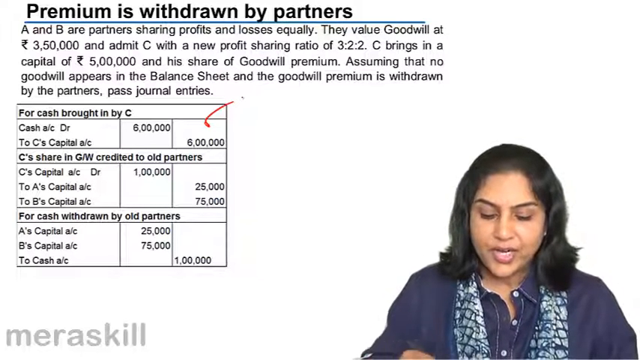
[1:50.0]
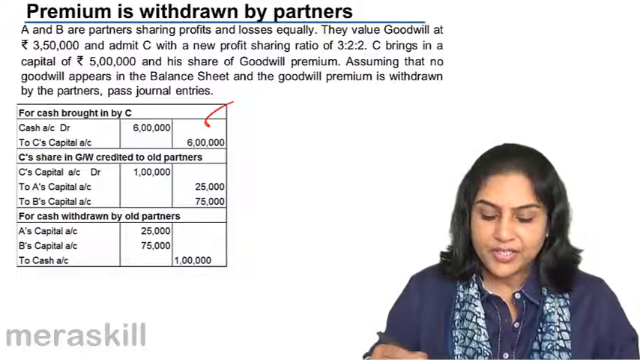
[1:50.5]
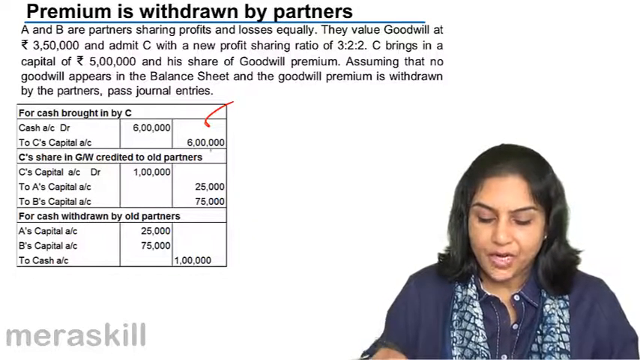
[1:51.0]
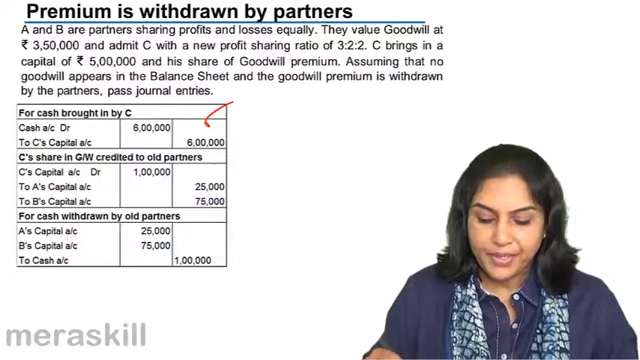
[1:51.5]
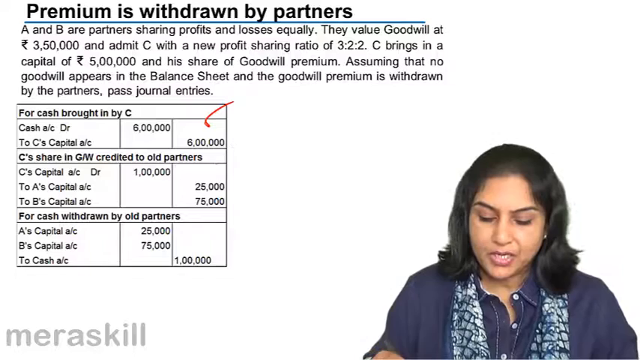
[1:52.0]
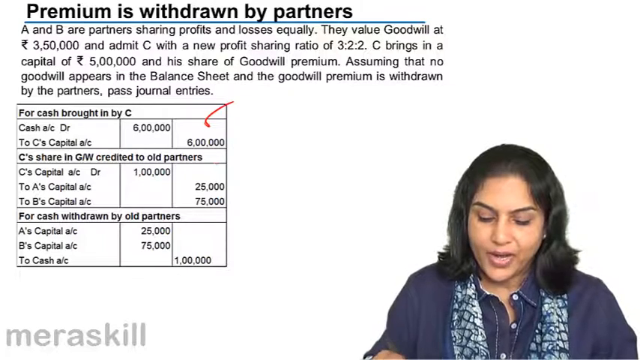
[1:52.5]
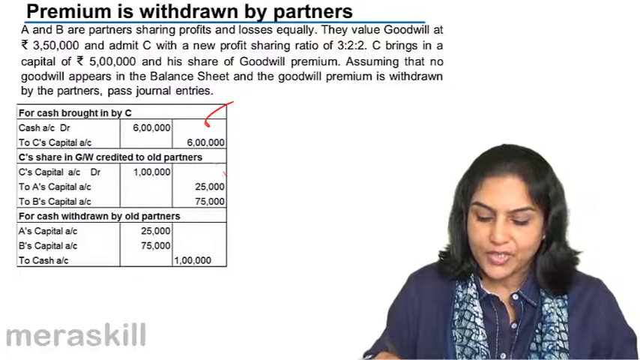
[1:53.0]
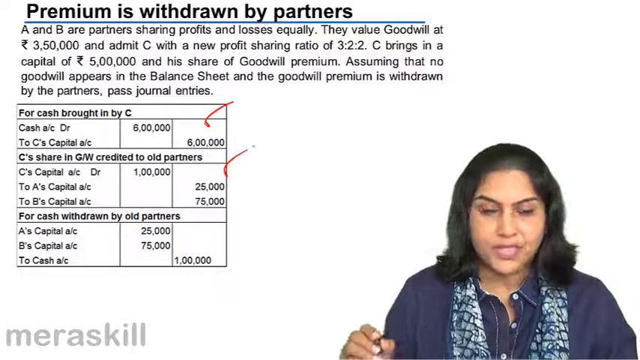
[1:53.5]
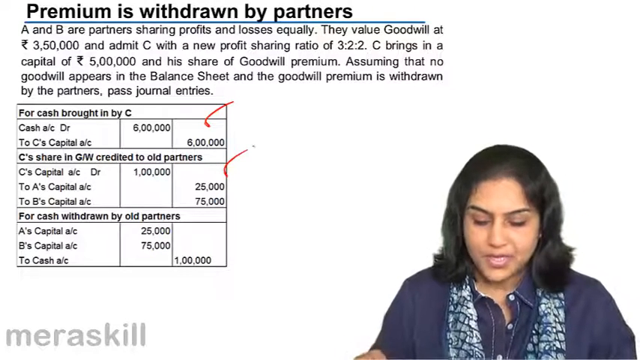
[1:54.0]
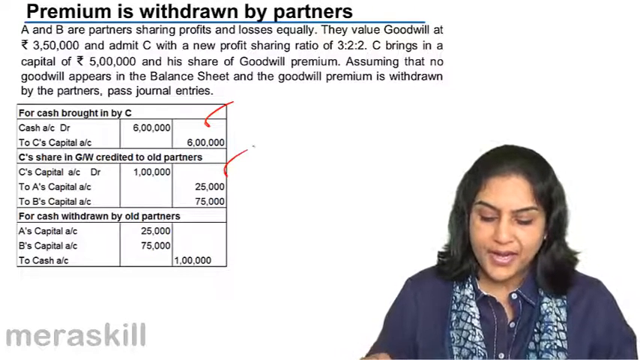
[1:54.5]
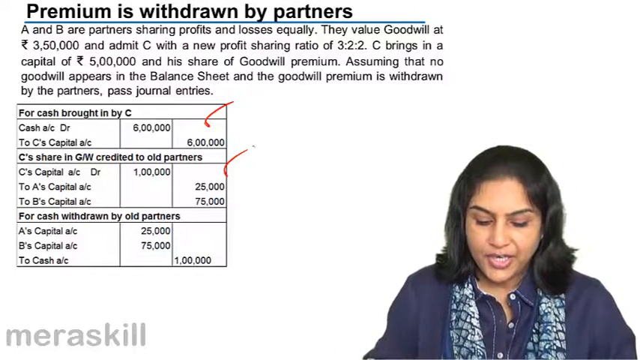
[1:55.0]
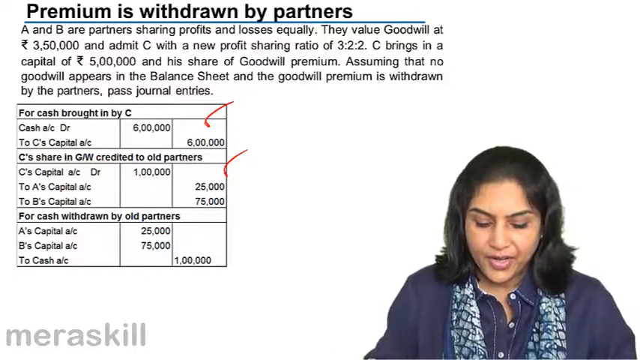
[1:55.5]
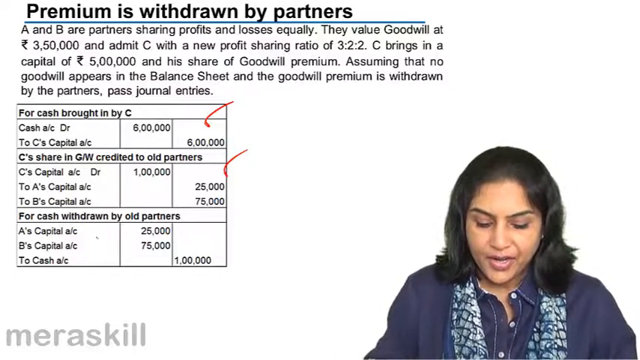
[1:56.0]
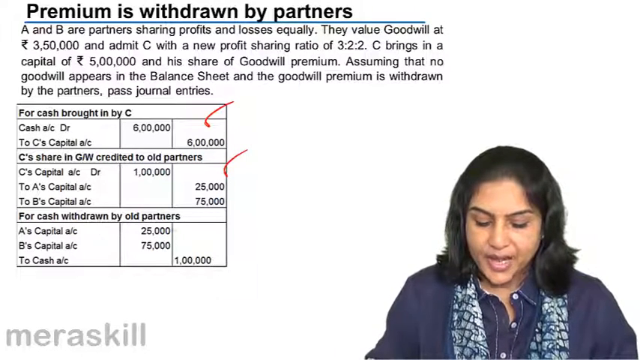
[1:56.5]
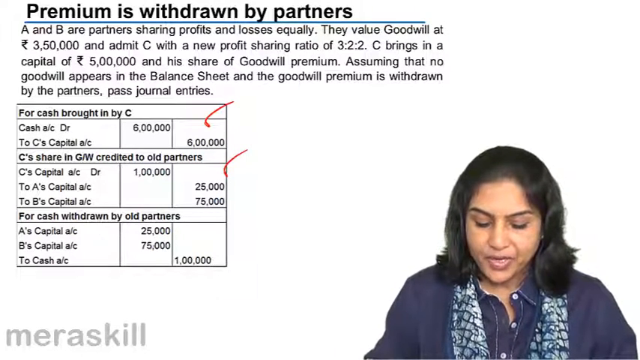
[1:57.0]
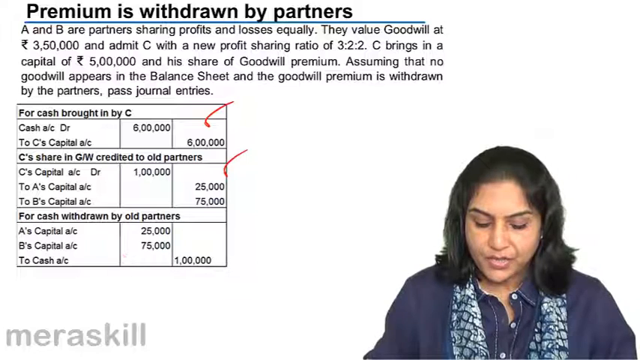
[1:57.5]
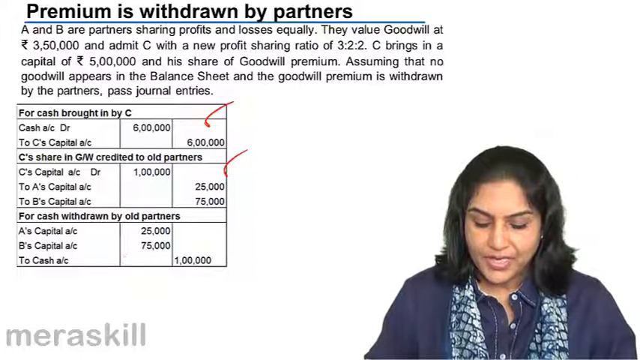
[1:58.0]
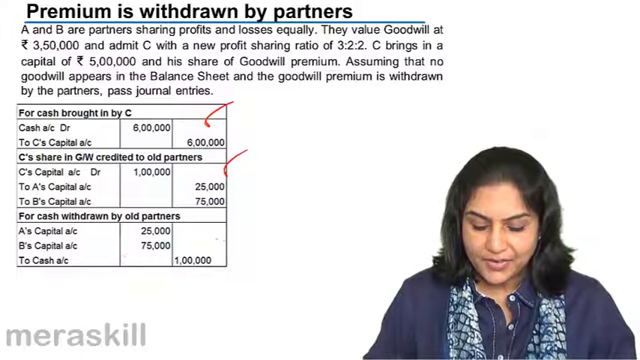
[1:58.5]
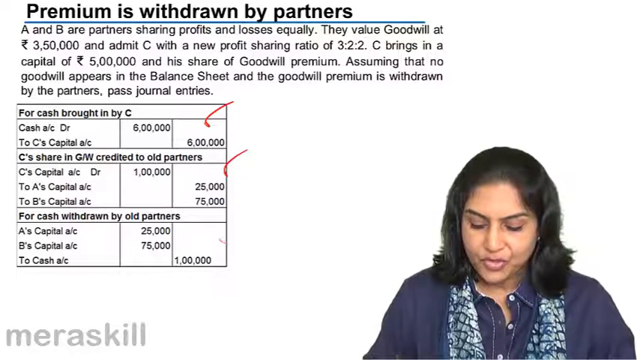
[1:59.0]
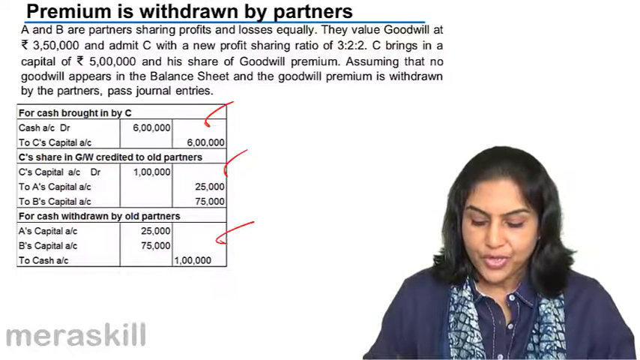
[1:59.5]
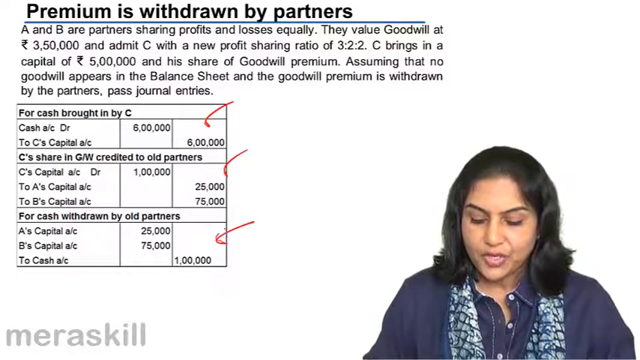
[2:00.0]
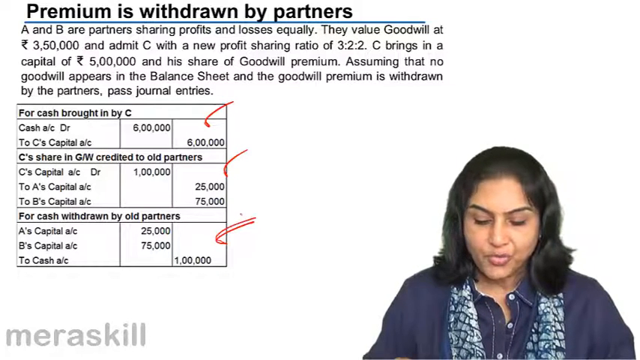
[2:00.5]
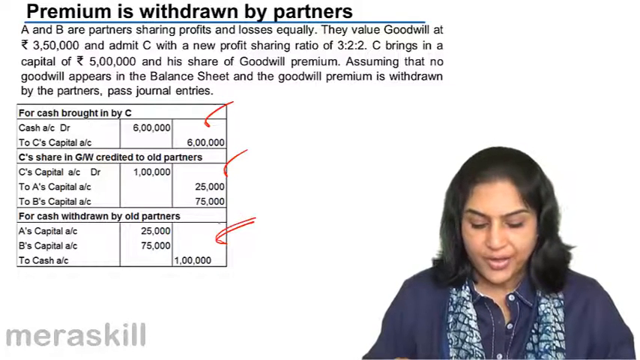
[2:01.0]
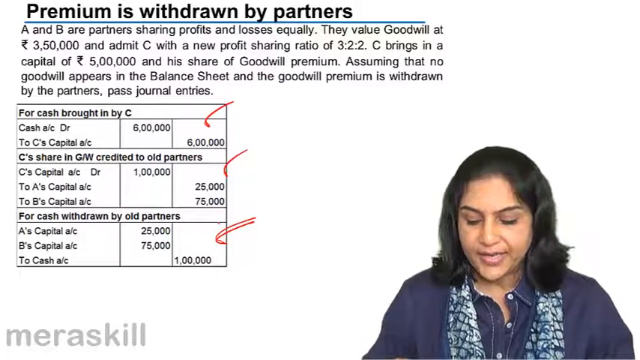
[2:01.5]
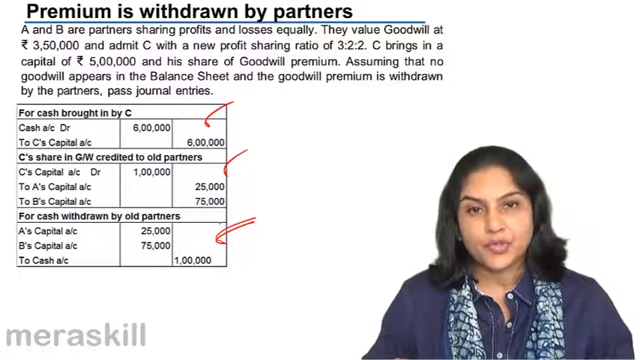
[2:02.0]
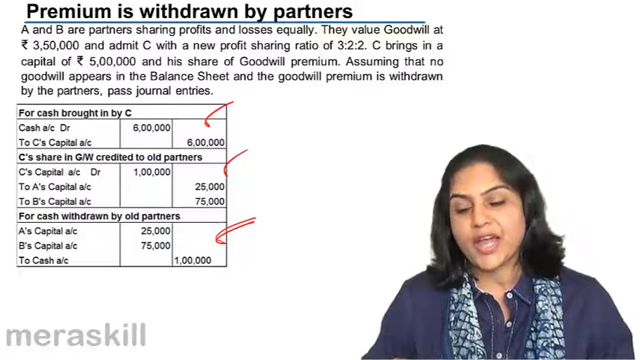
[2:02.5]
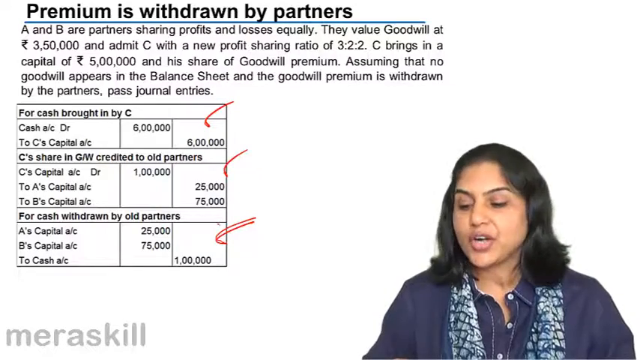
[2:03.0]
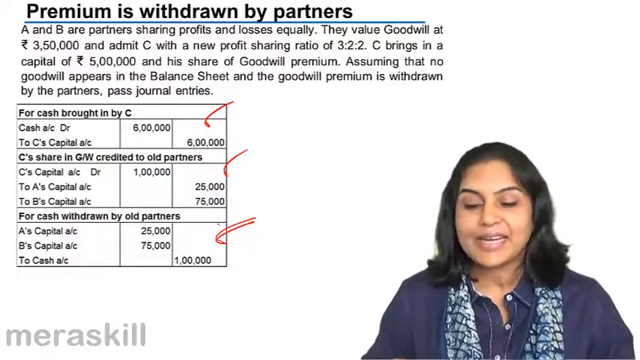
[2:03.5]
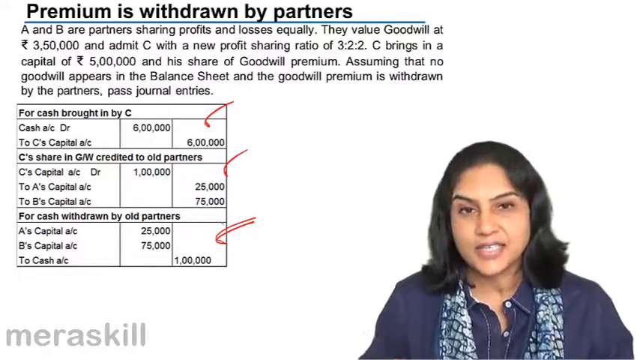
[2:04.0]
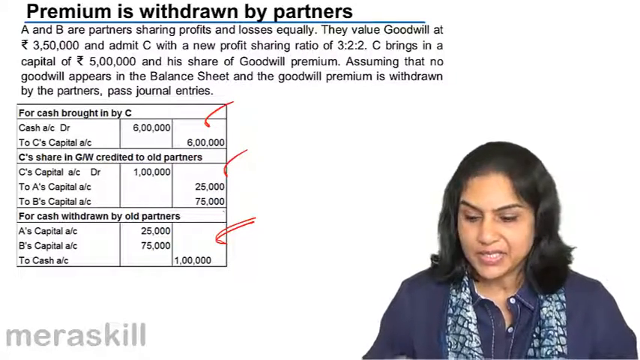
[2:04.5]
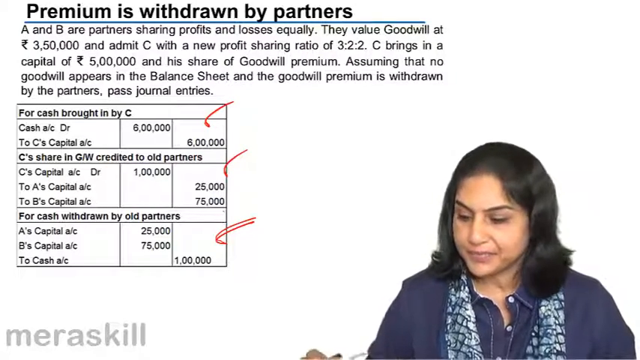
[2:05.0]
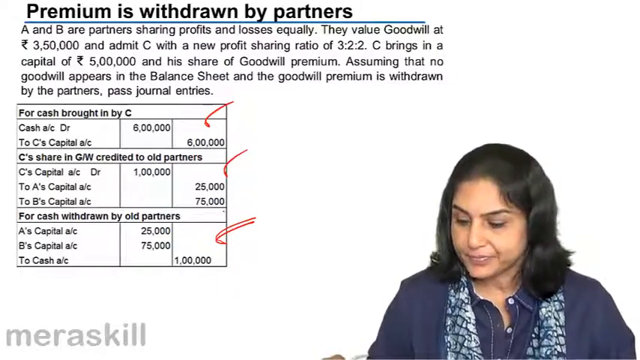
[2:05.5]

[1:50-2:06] The "premium is withdrawn by partner" screen is shown, with the box chart on the left side of the text. The woman is in the bottom right corner, with her camera focused directly on her, still speaking and looking down. The top of the pen in her right hand moves from side to side and up and down as she writes and makes marks. She makes two marks on the box graph area, her cursor hovers over the box area, and she makes a third line and then a fourth, with the two lines connected side by side in the "forecast withdrawn by old partners" section. She looks up at the camera and sort of moves her head slightly from side to side while speaking, then looks back down, focuses on the page again and continues to speak while looking down.